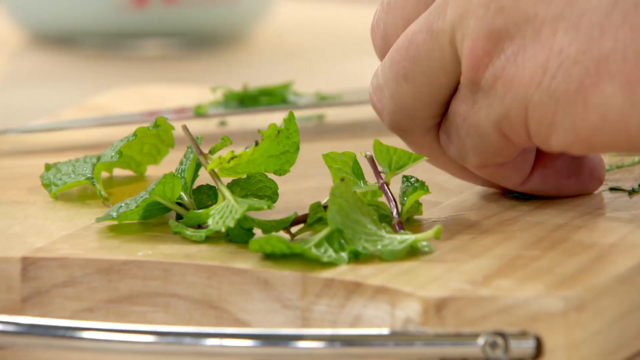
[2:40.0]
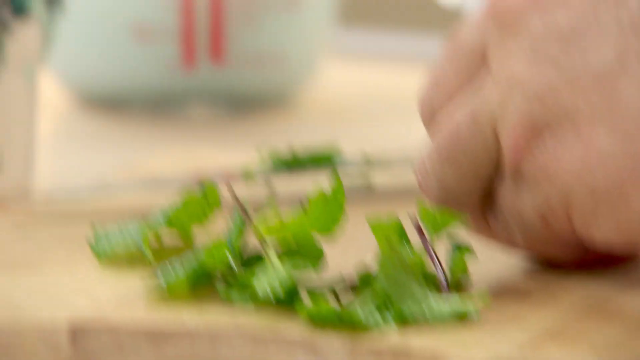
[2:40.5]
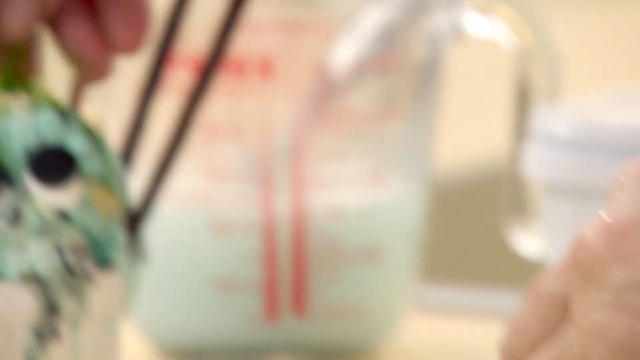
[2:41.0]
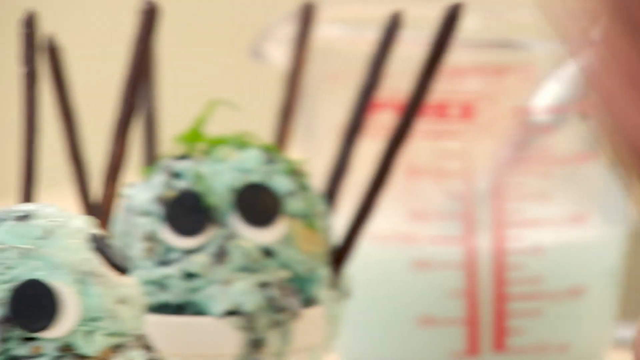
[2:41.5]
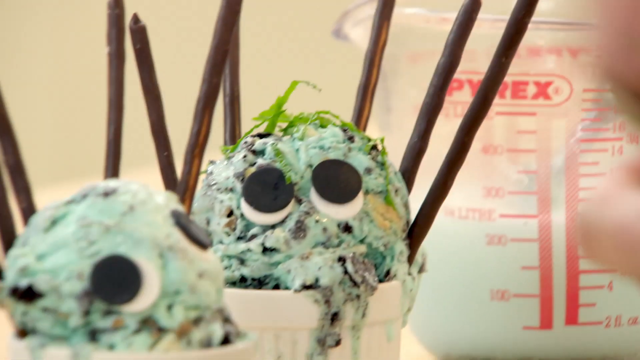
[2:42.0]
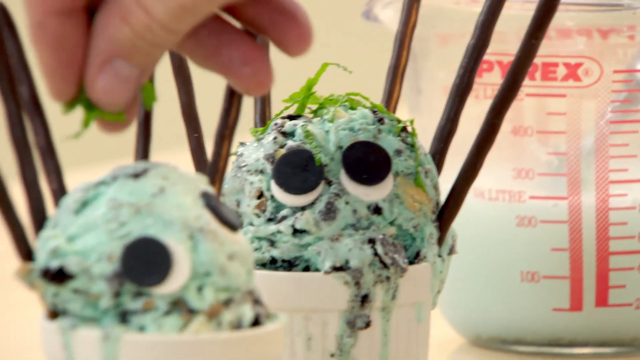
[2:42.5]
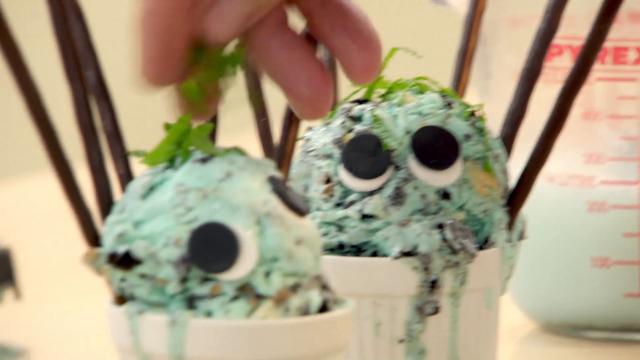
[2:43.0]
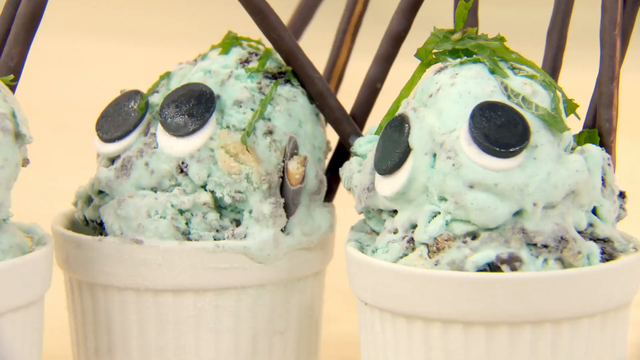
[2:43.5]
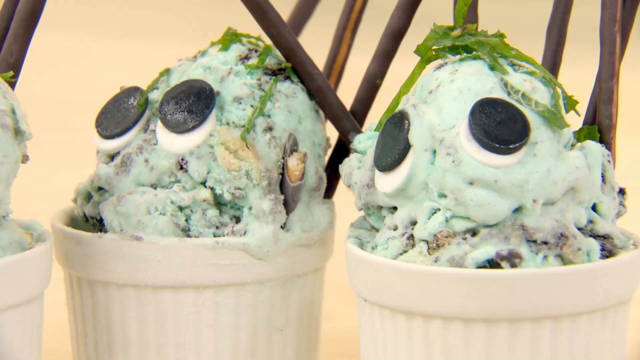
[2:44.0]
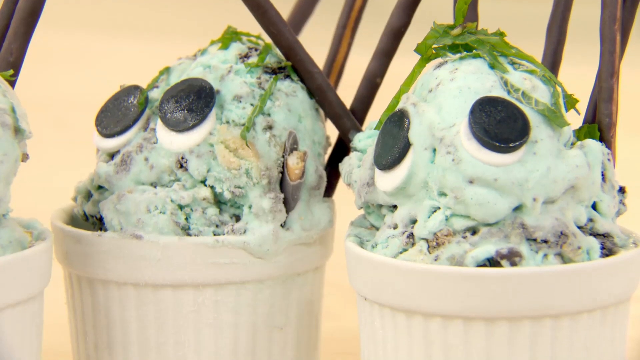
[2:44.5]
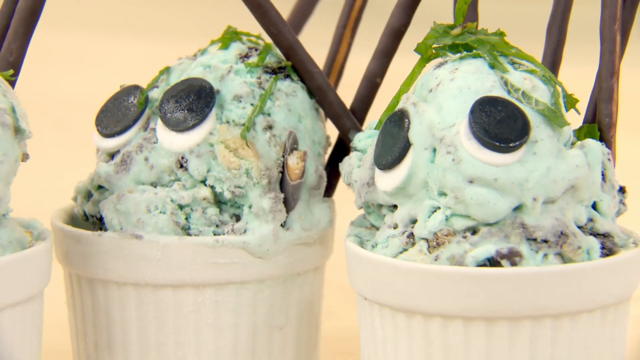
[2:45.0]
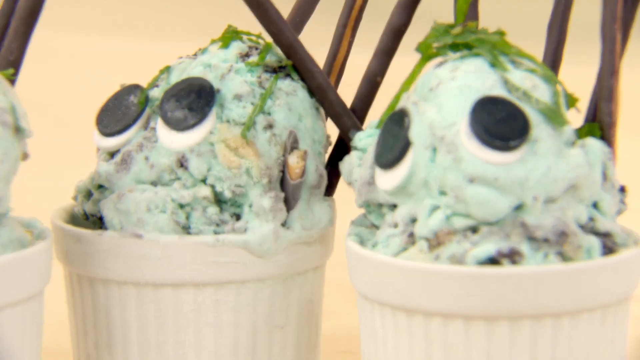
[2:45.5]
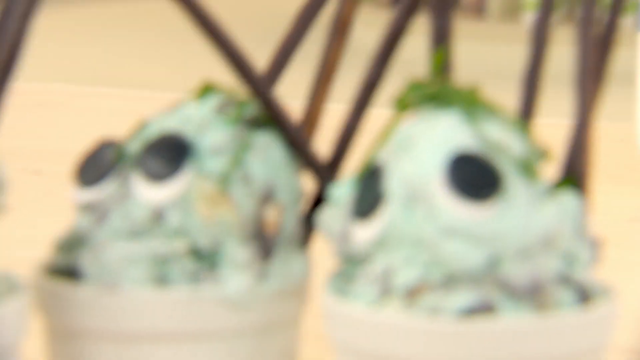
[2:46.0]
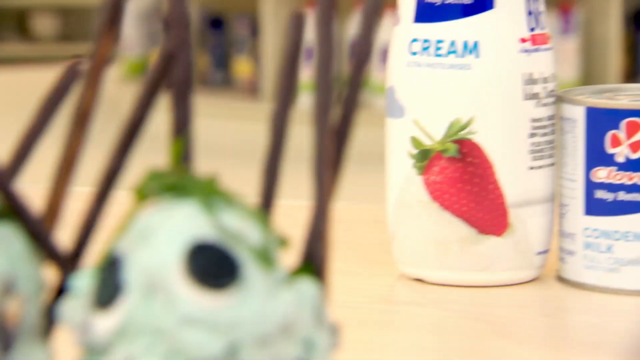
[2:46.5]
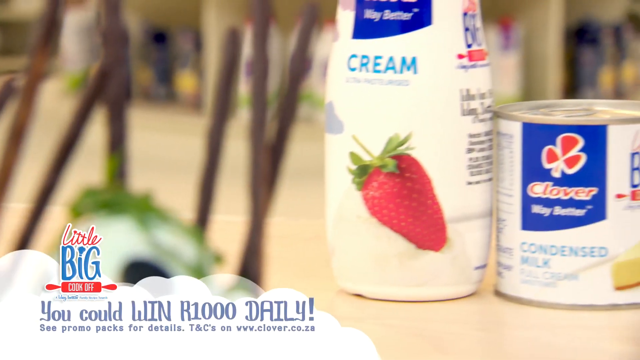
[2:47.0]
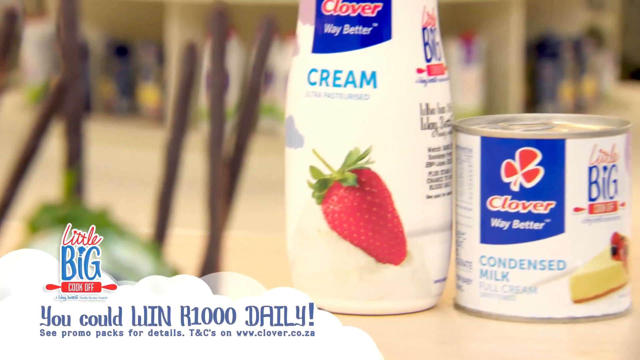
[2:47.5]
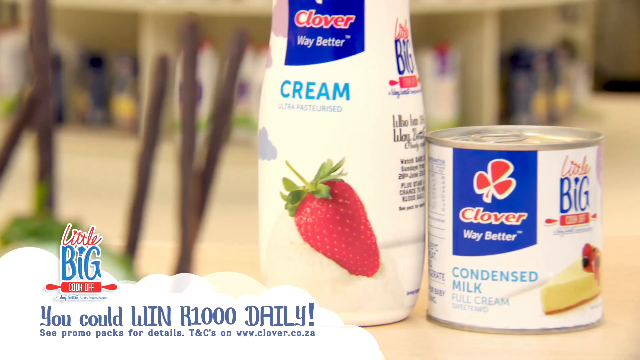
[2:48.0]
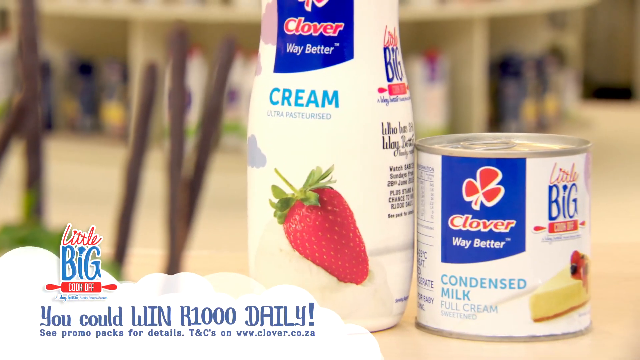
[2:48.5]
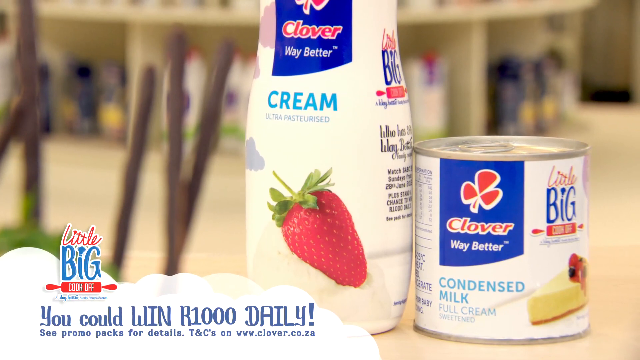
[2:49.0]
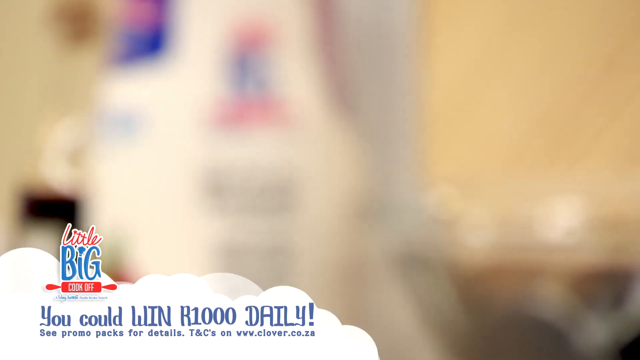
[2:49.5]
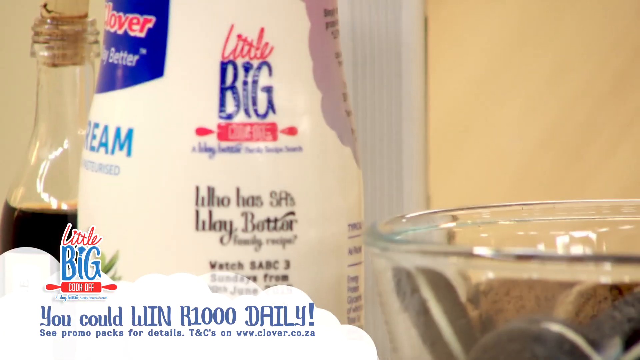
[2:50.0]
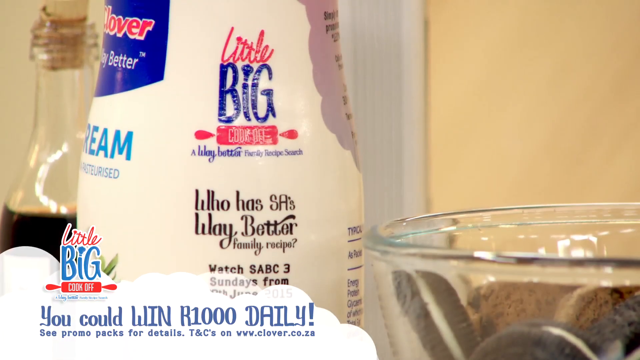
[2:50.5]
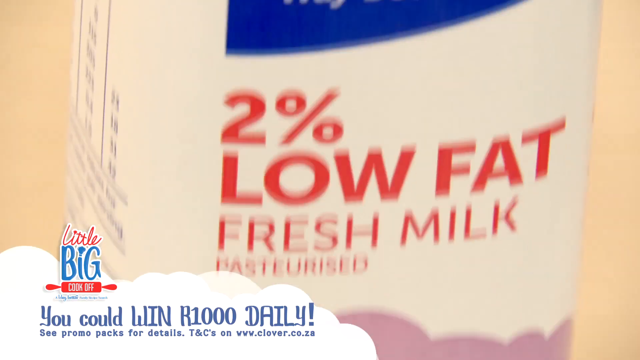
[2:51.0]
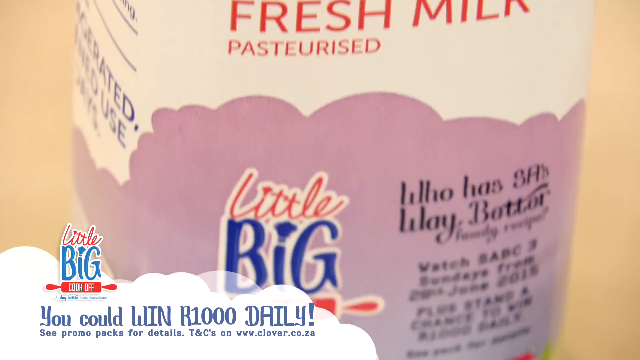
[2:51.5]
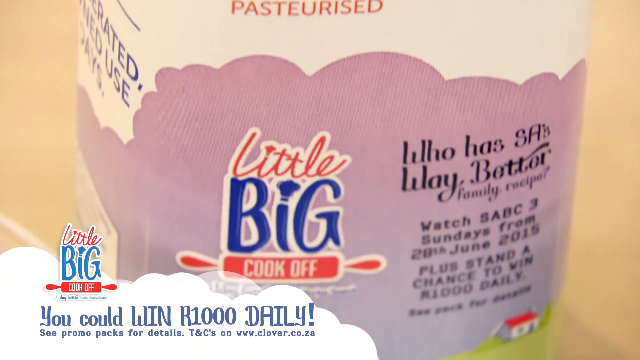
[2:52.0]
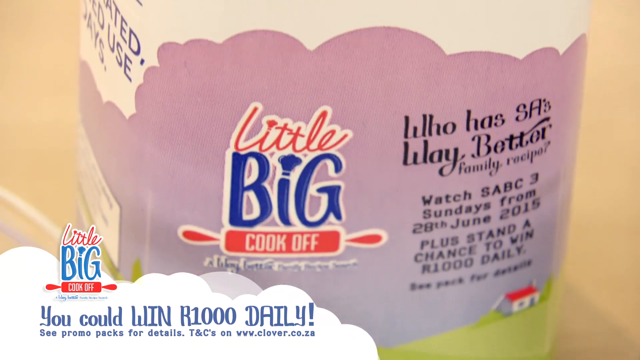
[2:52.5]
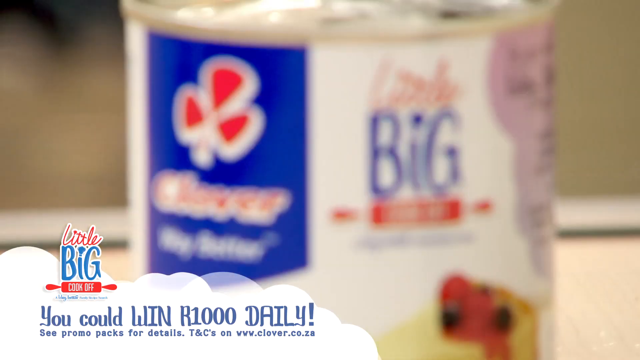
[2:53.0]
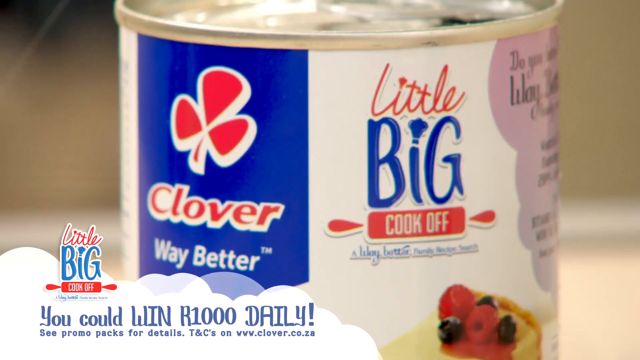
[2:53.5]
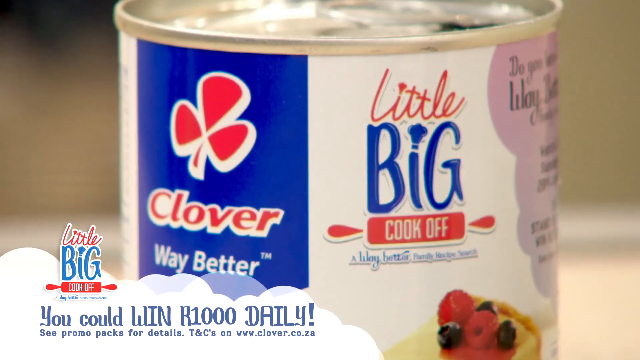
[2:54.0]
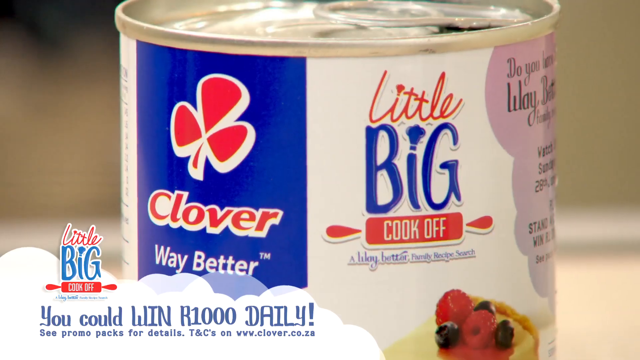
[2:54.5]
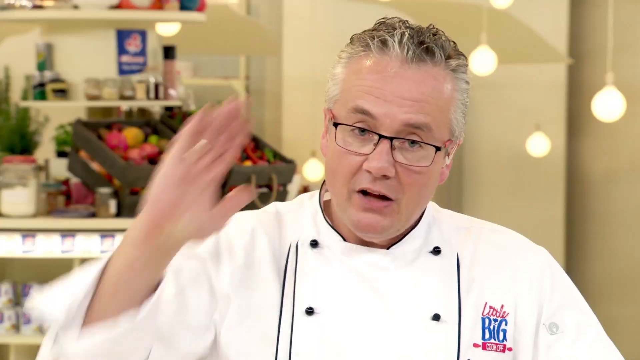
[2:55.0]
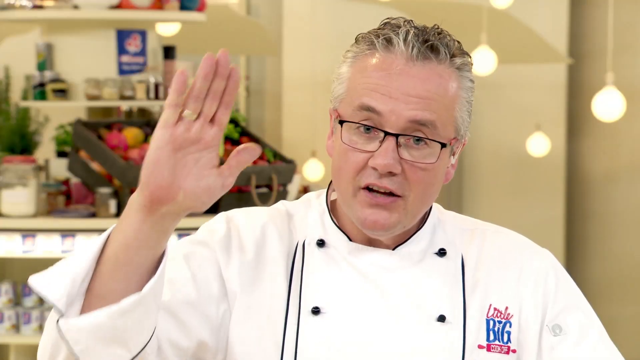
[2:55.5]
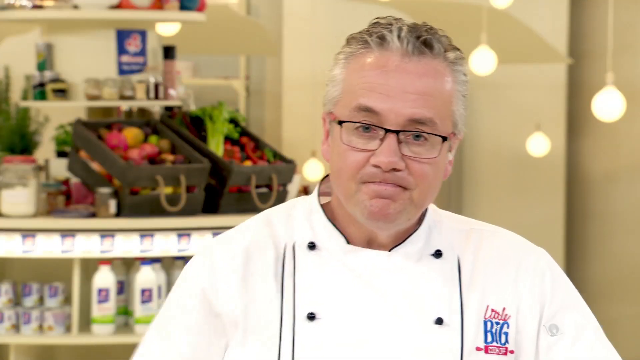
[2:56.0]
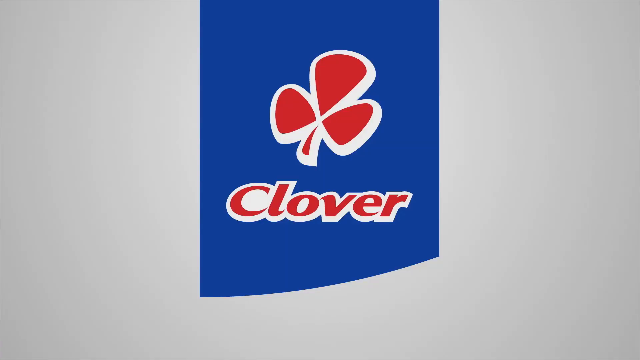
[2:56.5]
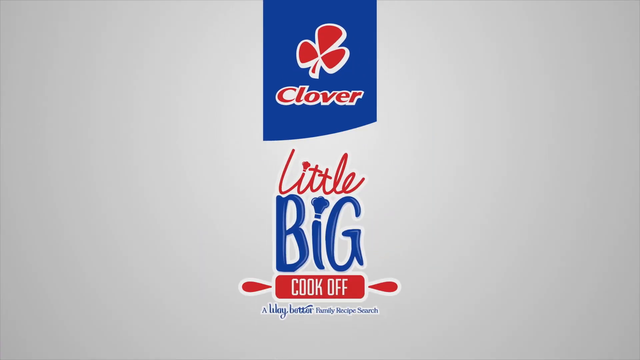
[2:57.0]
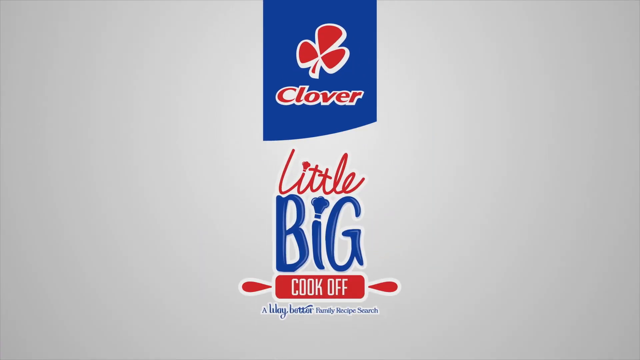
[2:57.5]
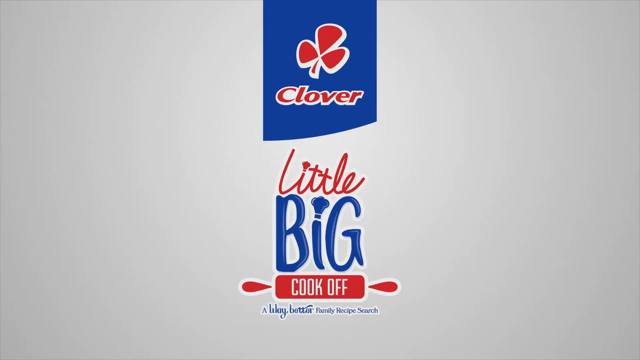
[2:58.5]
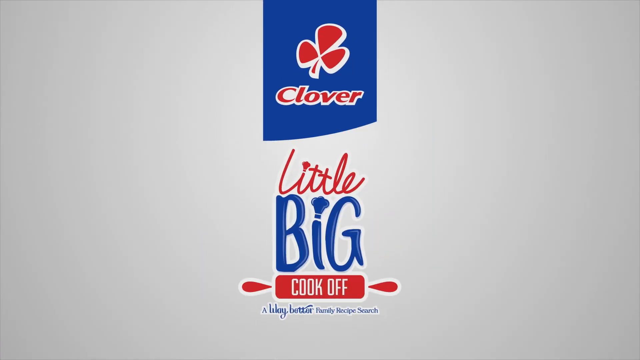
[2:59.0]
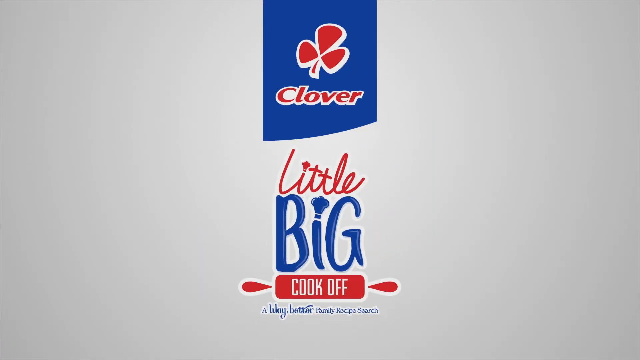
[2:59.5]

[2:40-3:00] On the counter, someone chops what looks like mint leaves on a wooden cutting board. The camera moves to two white cups of what looks like mint chip ice cream with sticks, apparently chocolate, poking out of it, and a hand puts the mint on top of the ice cream. Another view shows the small bowls of ice cream made to look like they have eyes, each a black circle over a white circle. The camera moves to a plastic bottle of Clover cream with a strawberry pictured on it and a can of condensed milk with the Clover logo and a piece of cheesecake pictured on it. Text at the bottom of the screen reads "you could win our 1,000 daily C promo packs for details T and C's on www.clover.co.za". The camera zooms in on the bottle of Clover cream from a different angle and pans from top to bottom, then zooms in on the Clover logo: a blue background with a small red clover leaf and the words "clover, way better". The chef appears from the shoulders up, looking at the camera, and raises his hand, showing a wedding ring on his ring finger, waving goodbye. The Clover logo is shown again with little big cook-off at the bottom of the screen.